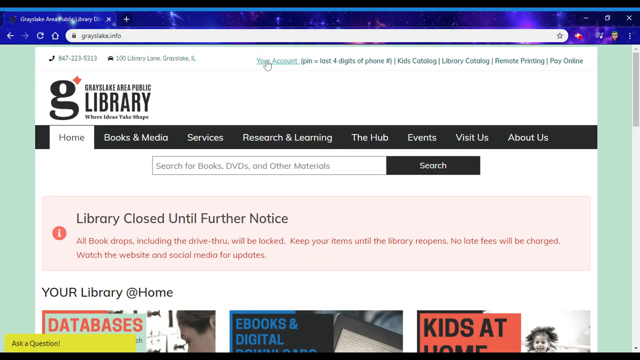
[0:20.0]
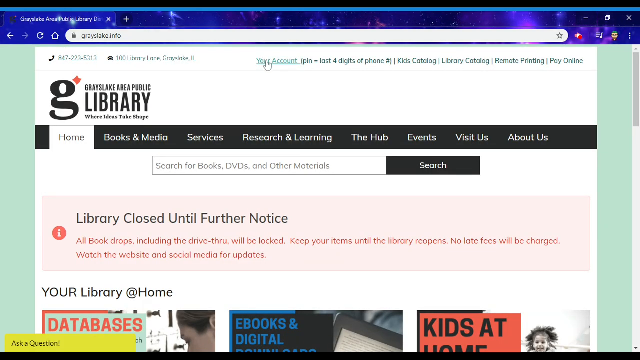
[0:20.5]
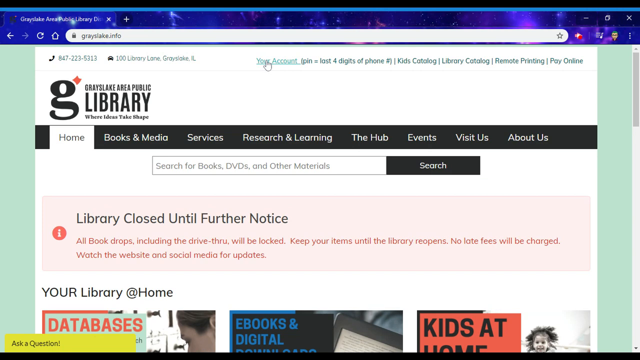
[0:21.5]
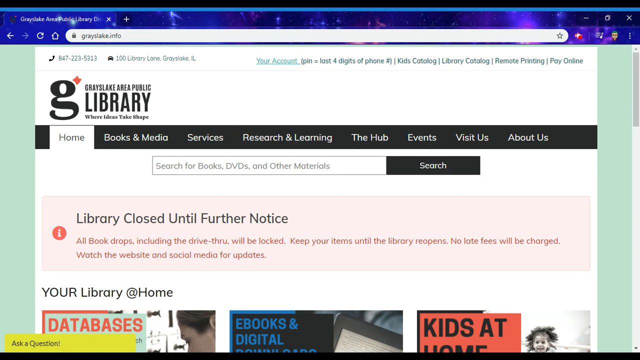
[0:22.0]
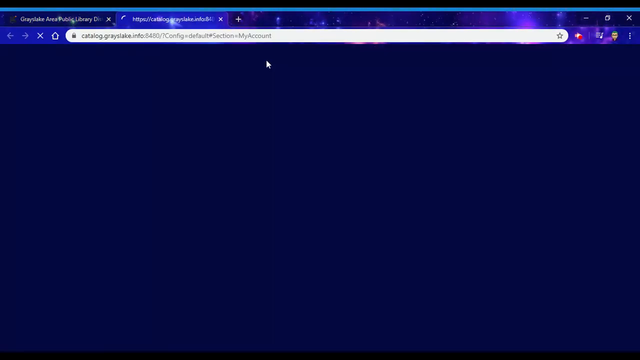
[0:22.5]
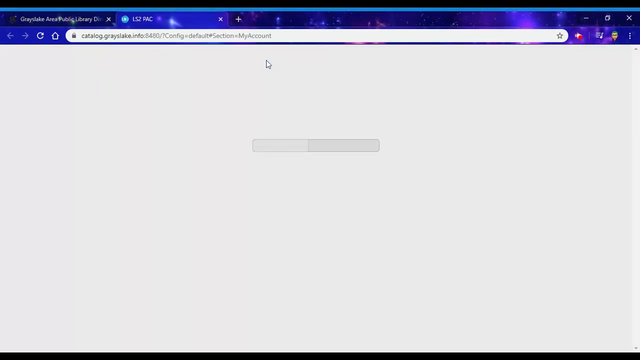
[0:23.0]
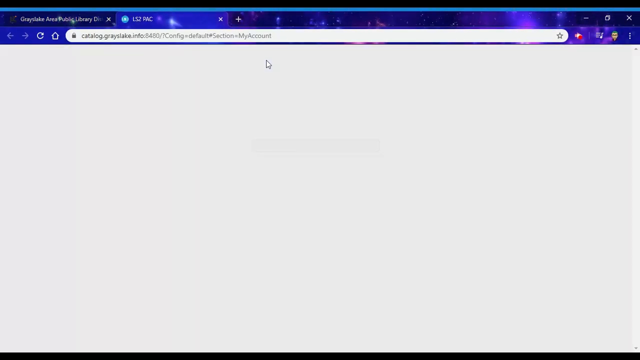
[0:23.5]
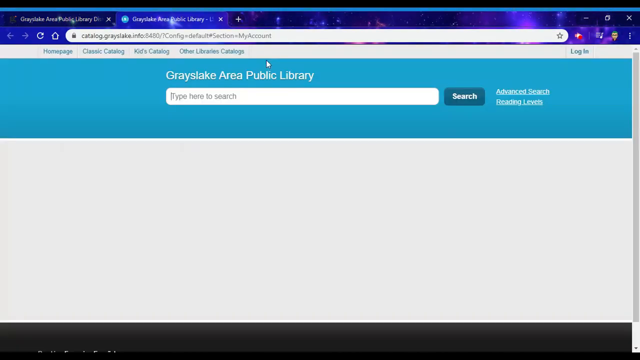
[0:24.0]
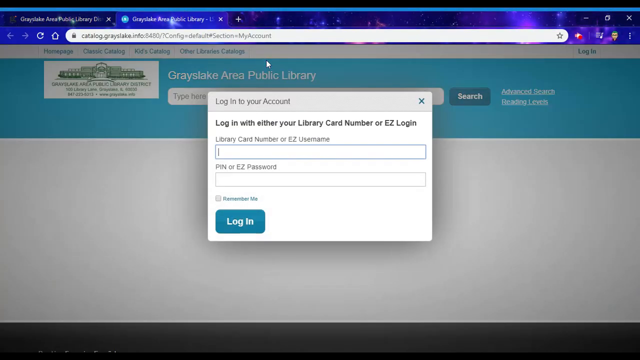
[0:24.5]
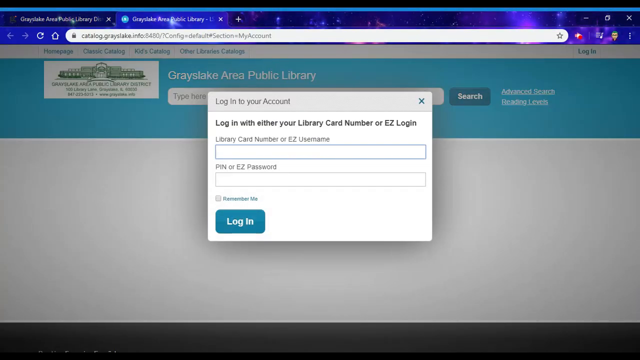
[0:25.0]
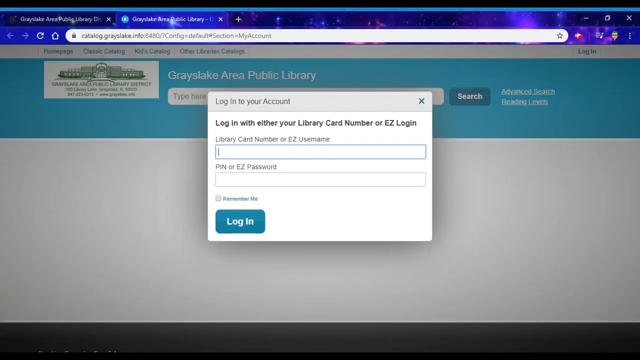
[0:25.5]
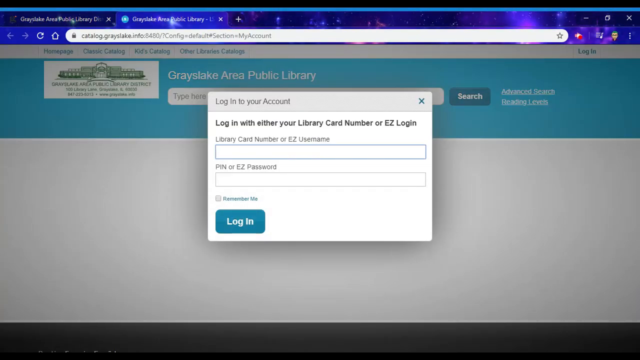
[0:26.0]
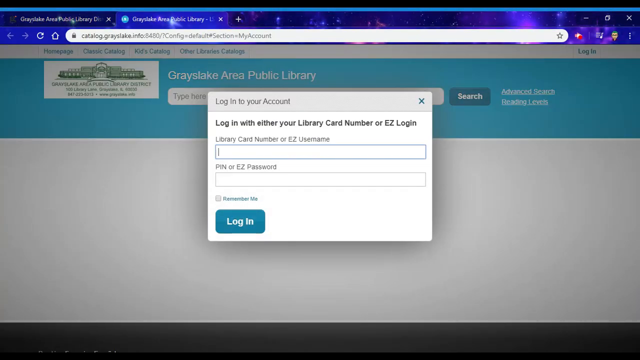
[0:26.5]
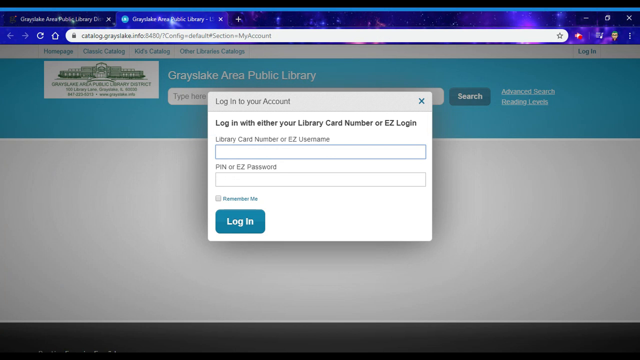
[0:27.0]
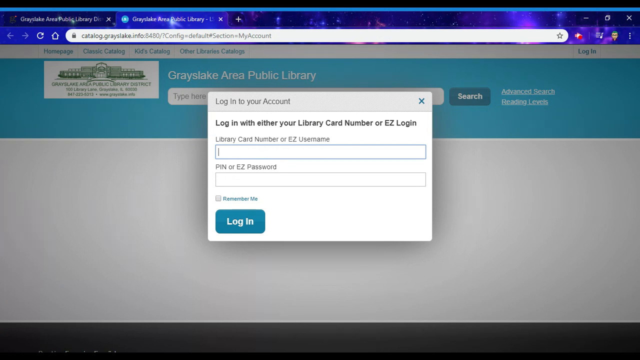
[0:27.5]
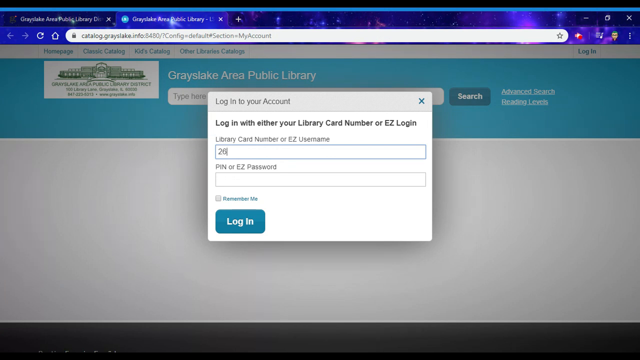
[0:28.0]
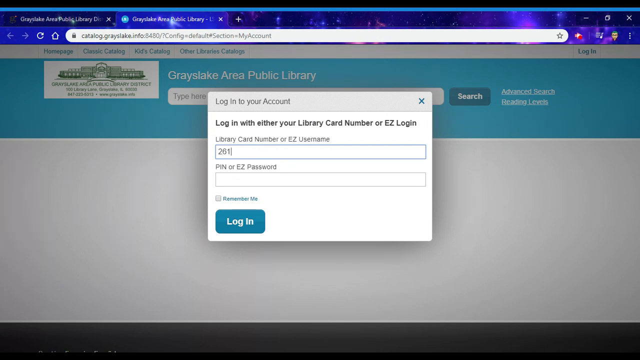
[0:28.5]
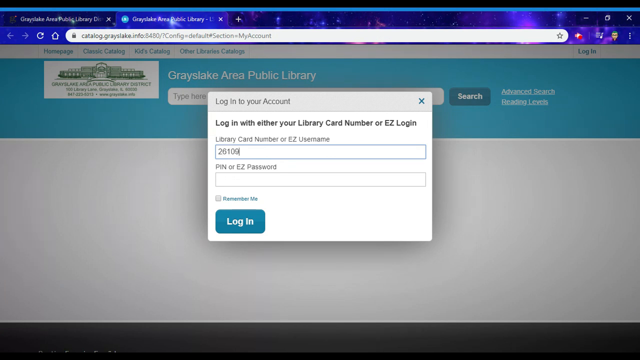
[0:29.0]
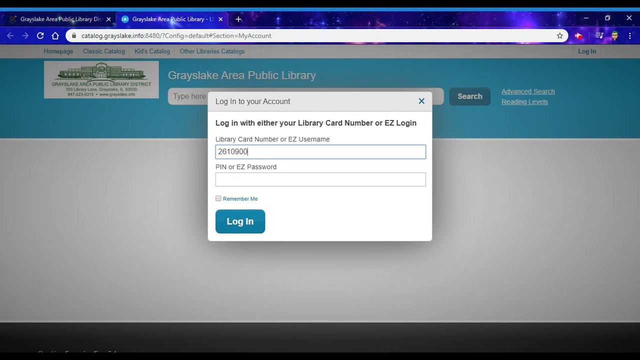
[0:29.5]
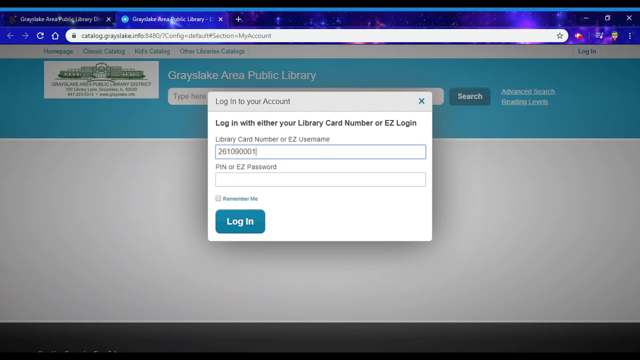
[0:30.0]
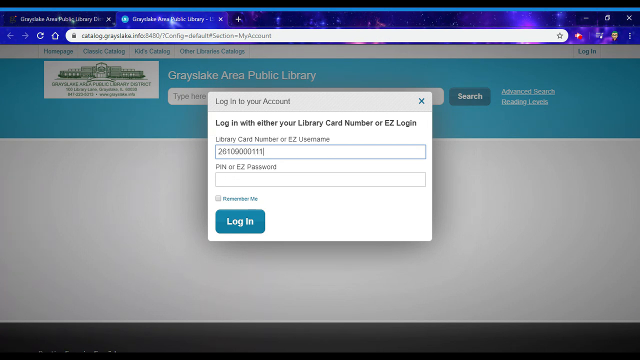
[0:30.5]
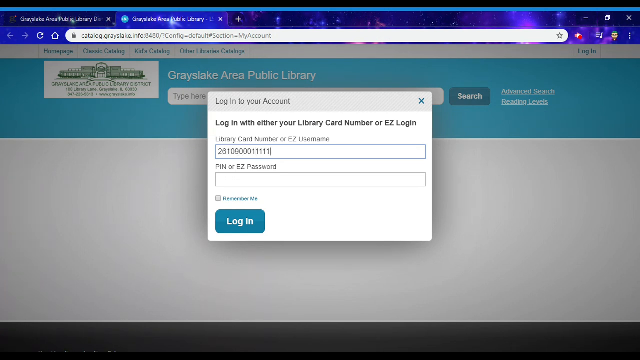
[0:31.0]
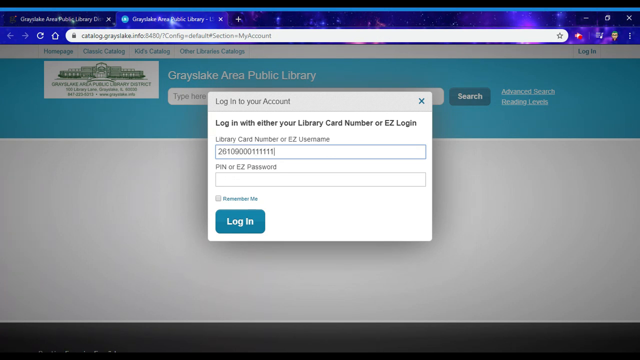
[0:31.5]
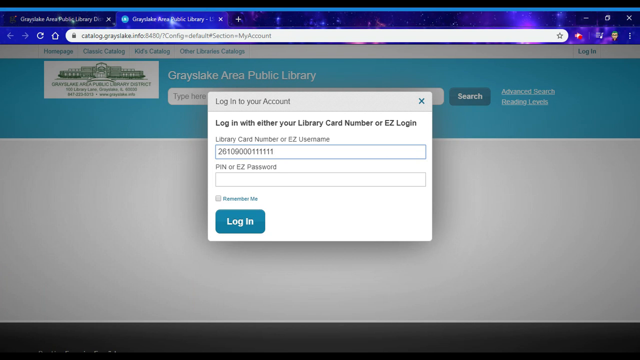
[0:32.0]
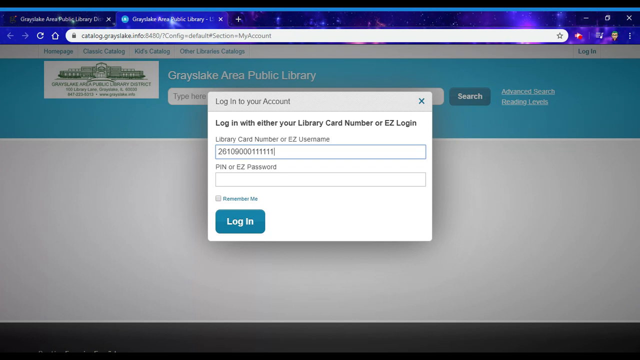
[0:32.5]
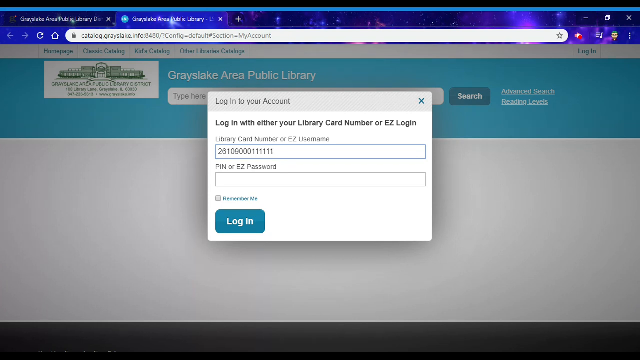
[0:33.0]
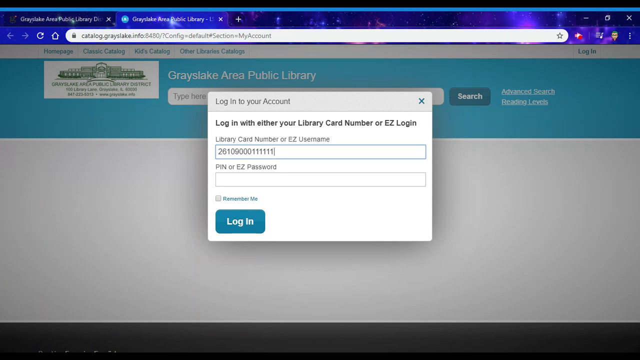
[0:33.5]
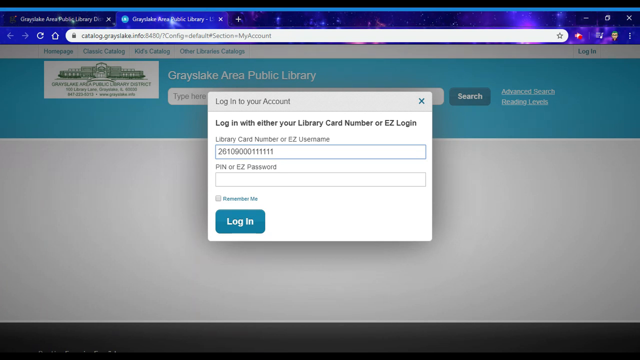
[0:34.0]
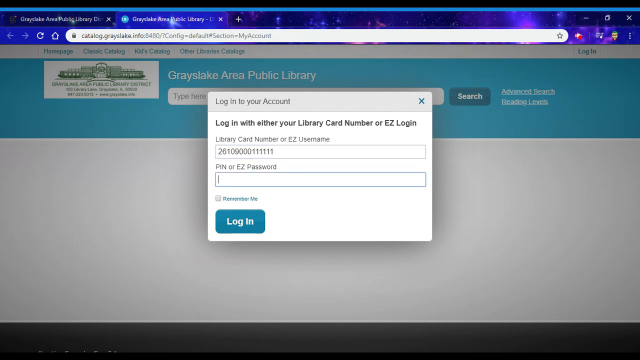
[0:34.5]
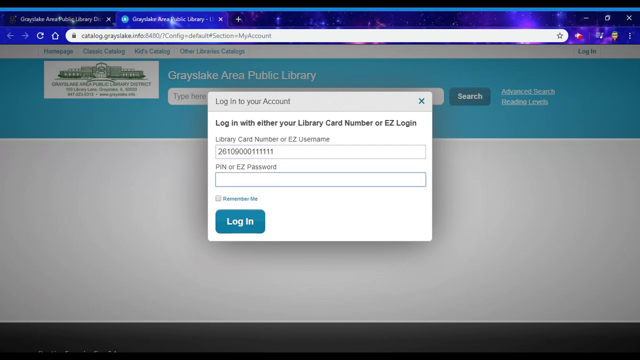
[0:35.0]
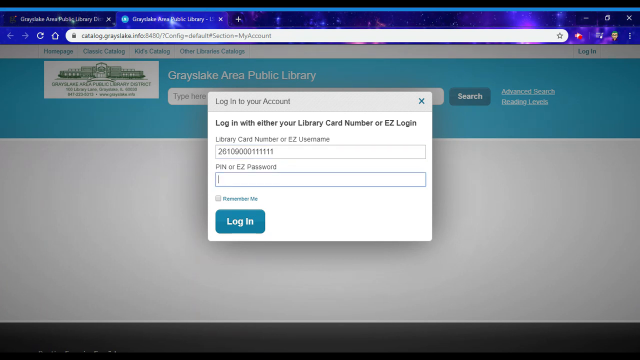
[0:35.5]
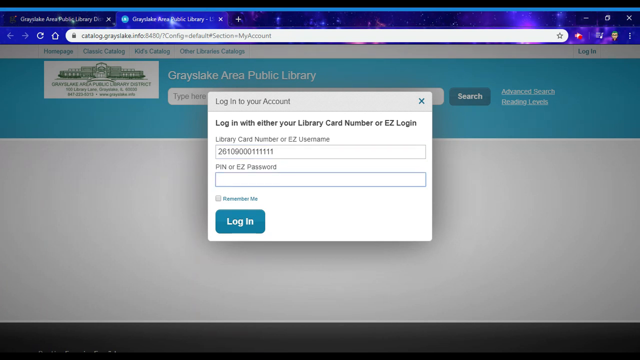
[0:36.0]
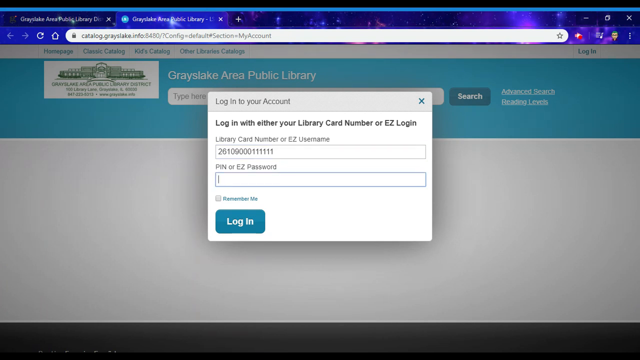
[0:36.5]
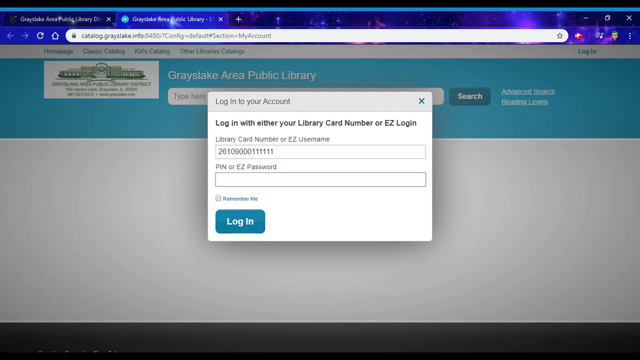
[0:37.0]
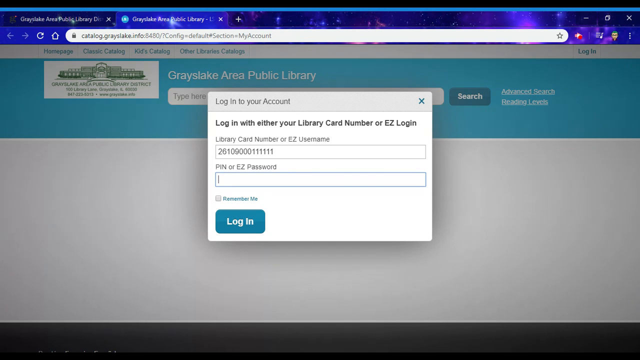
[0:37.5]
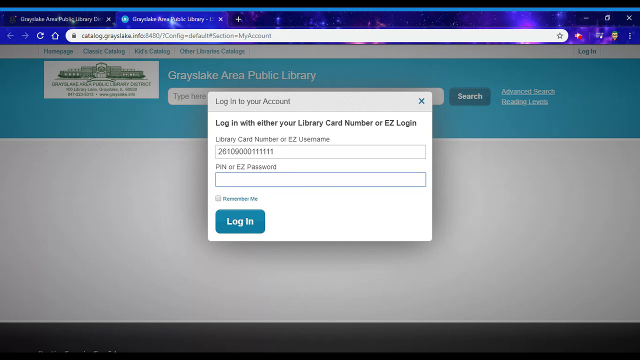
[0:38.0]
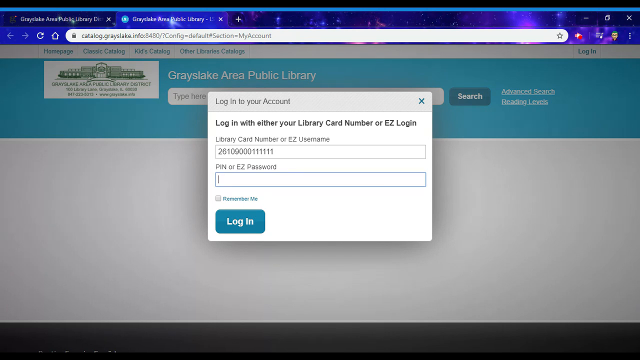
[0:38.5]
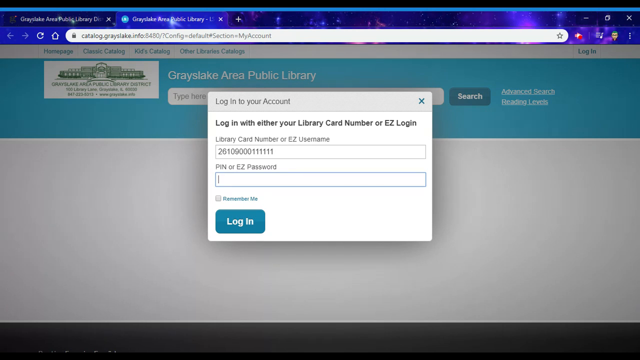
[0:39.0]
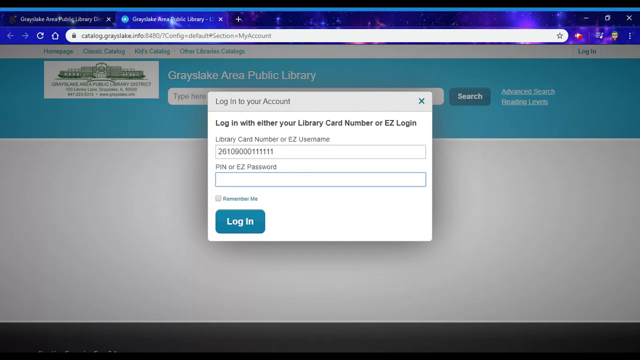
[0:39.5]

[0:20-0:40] The Gray's Lake Area Public Library page appears in an internet browser, apparently either Firefox or Chrome, with a giant banner across the middle of the page that says "library closed until further notice." The cursor clicks on the "my account" link at the very top in the middle of the page, which loads a separate tab for the account page. A pop-up says "log in to your account," offering a field for the library card number or easy login along with a field for the PIN or easy password. A long string of numbers is typed, apparently the card number. The PIN or password is not shown being entered.